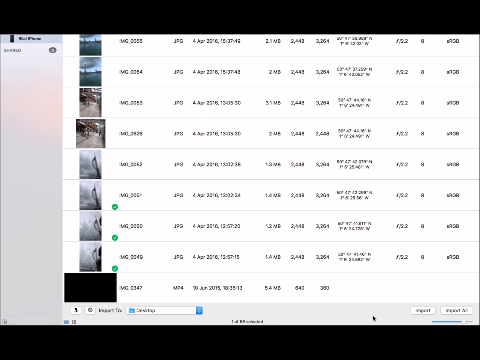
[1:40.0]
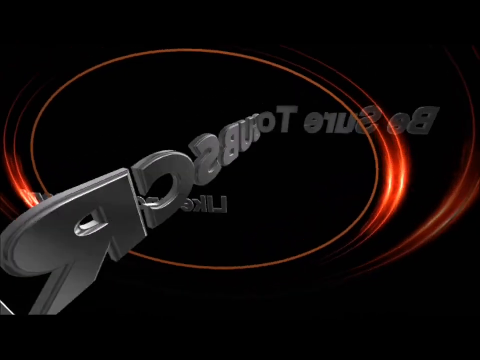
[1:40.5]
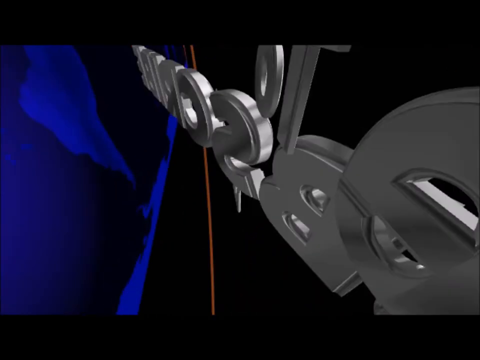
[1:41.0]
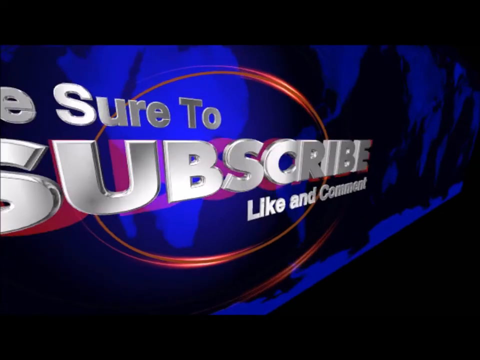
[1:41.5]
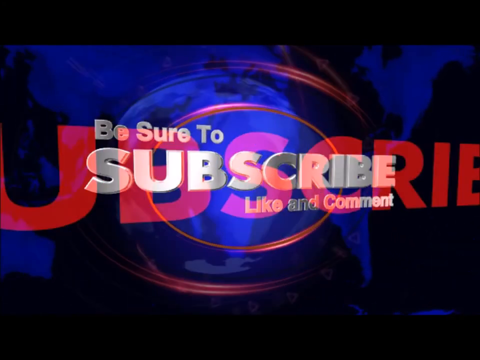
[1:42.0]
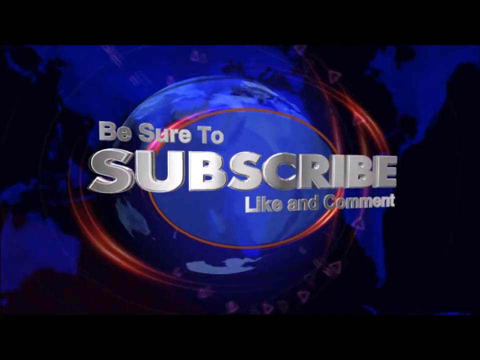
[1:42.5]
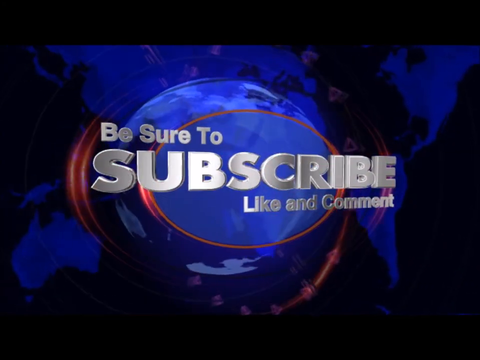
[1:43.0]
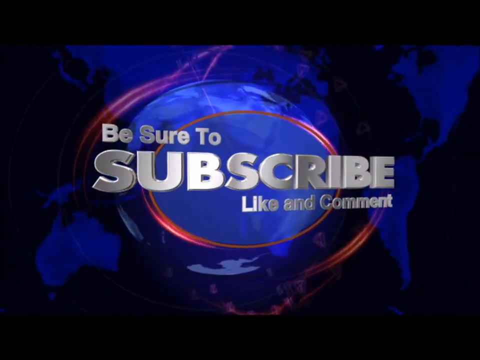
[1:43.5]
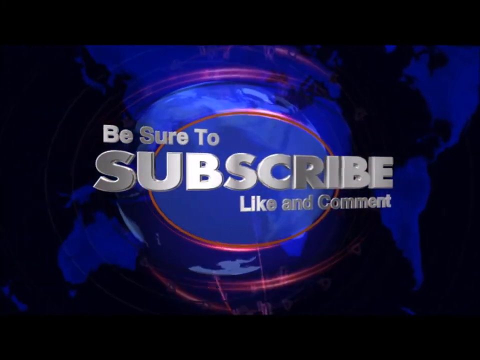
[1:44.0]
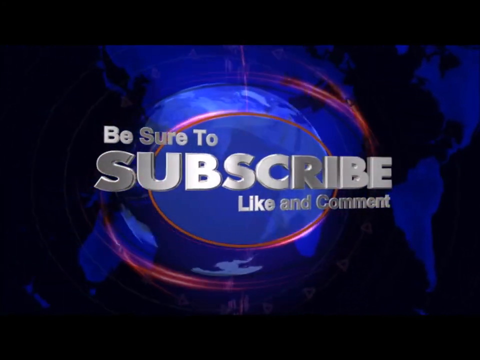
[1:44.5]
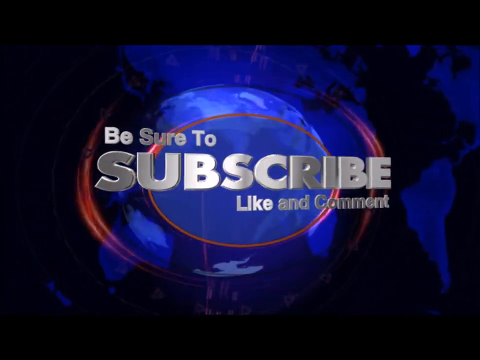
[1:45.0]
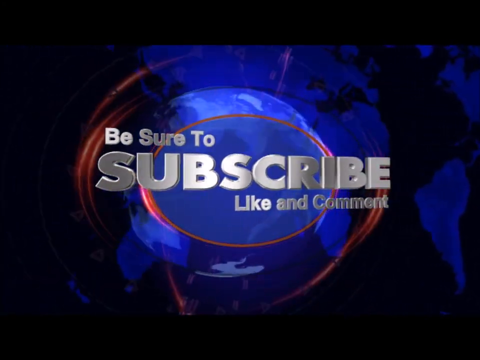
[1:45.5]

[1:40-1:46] The opening animation is shown again, with text going into a circle and spinning on top of the black and blue globe background. This time the text says "be sure to subscribe, like, and comment." "Subscribe" is in the middle in large capitalized text, "be sure to" is on top on the left, and "like and comment" is on the bottom on the right. Red laser-like swirls go around behind the text.